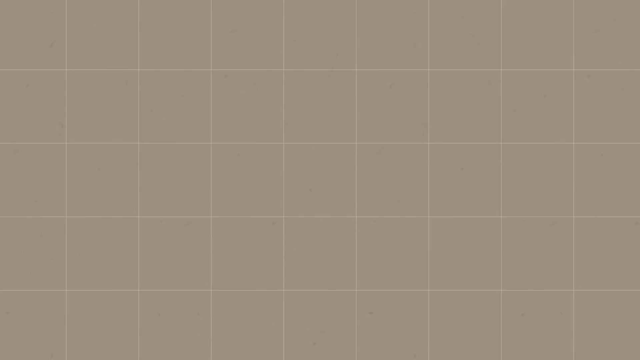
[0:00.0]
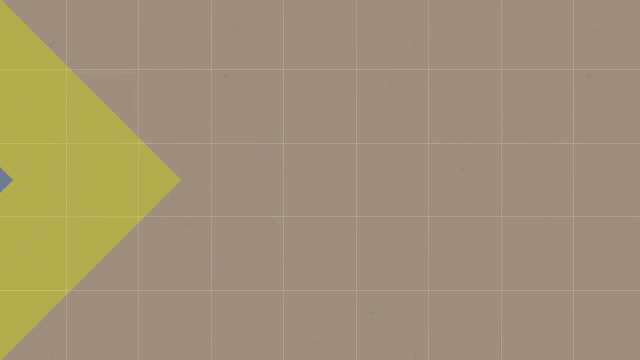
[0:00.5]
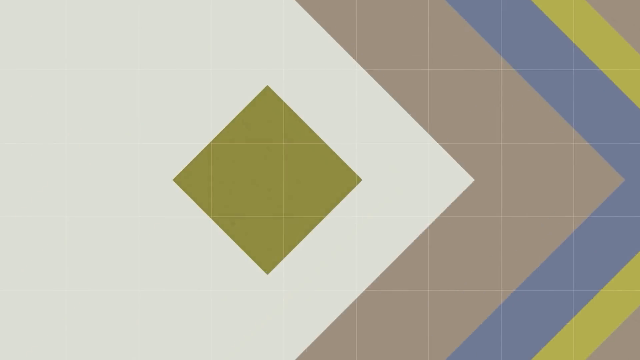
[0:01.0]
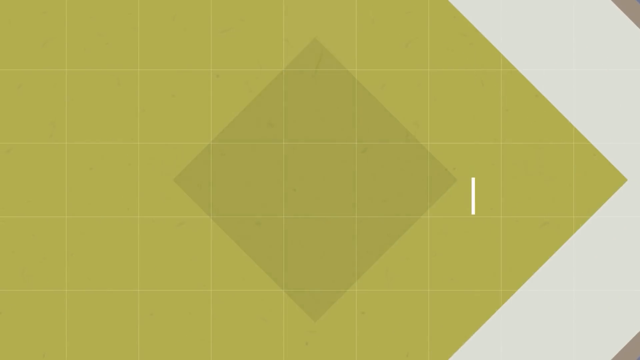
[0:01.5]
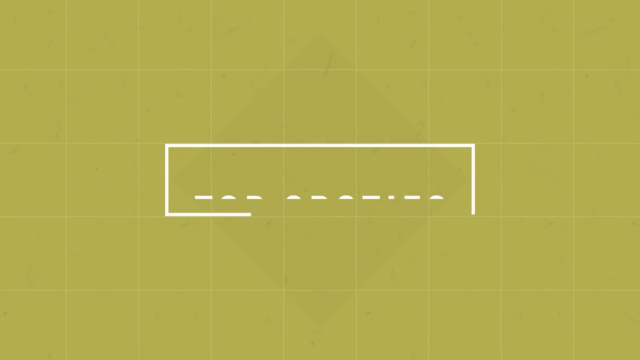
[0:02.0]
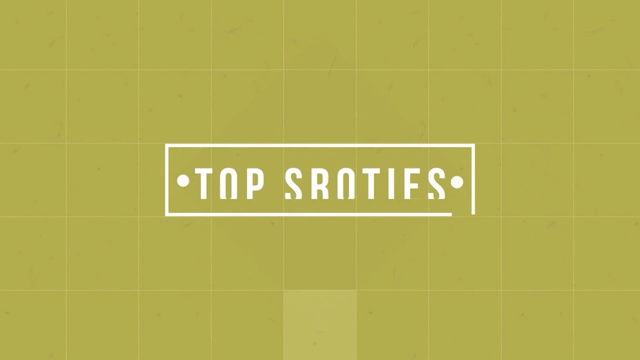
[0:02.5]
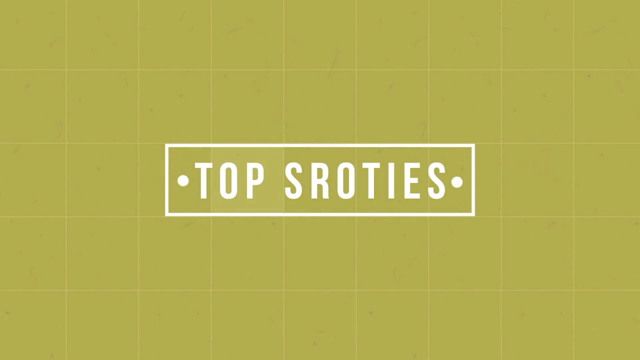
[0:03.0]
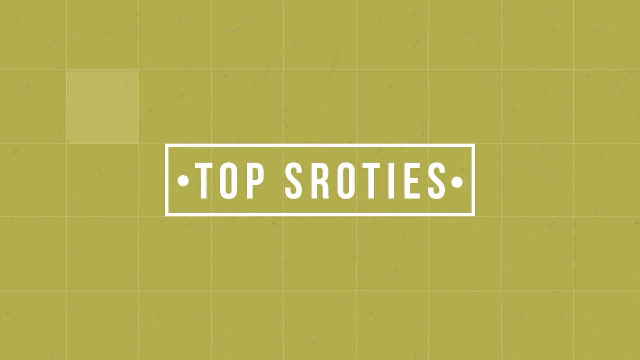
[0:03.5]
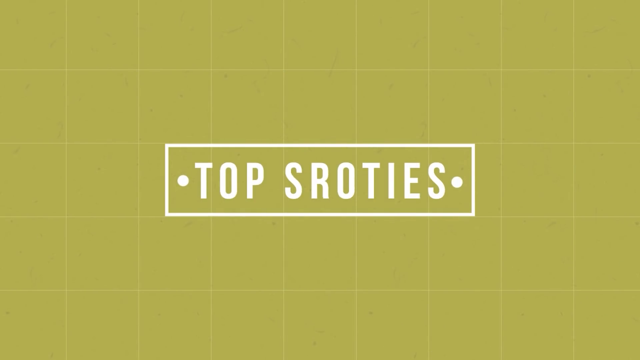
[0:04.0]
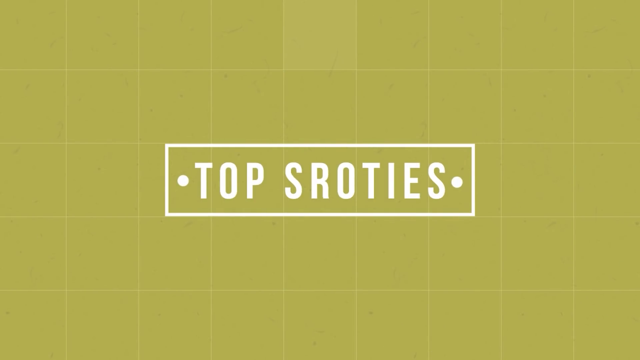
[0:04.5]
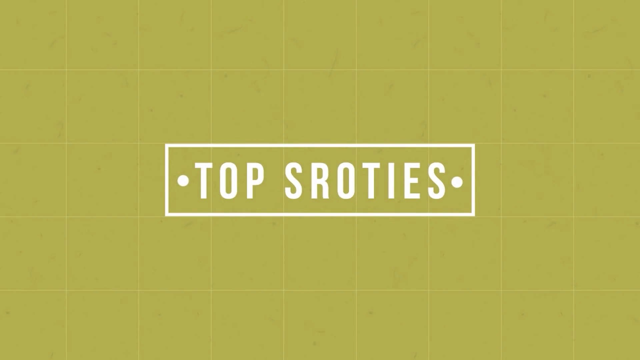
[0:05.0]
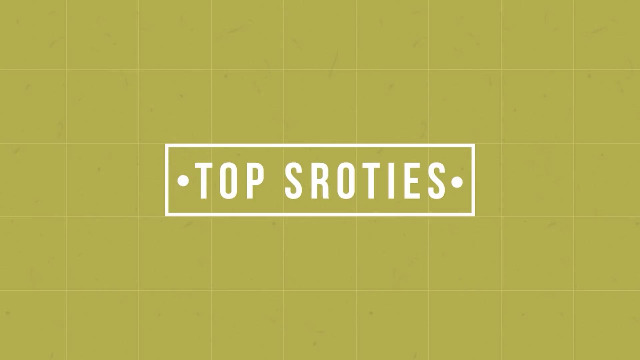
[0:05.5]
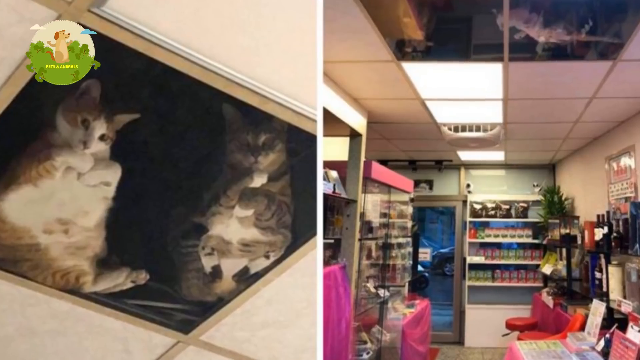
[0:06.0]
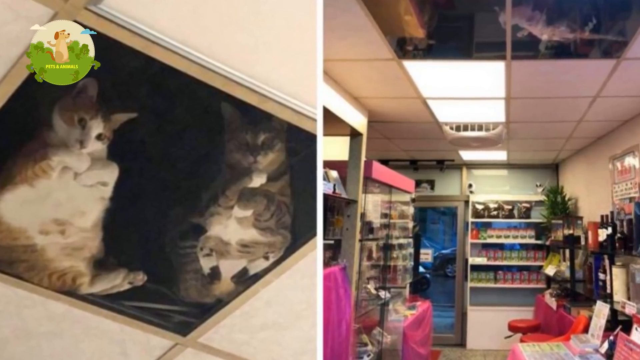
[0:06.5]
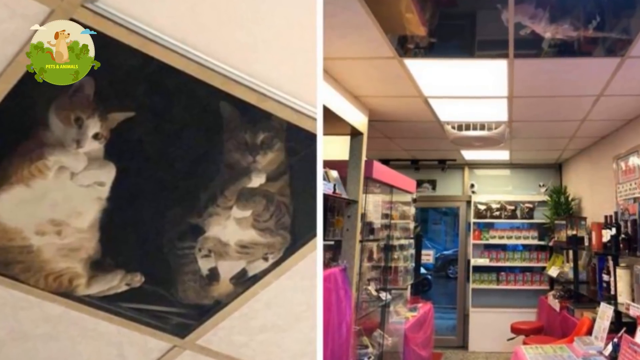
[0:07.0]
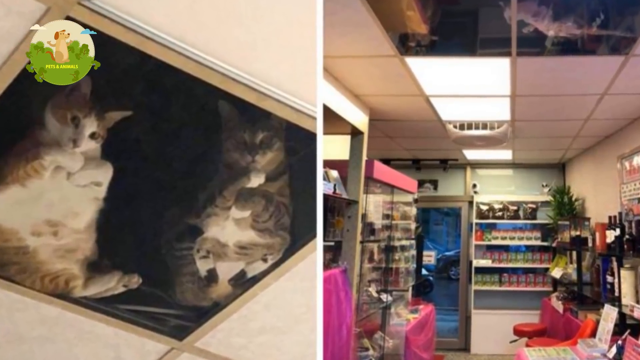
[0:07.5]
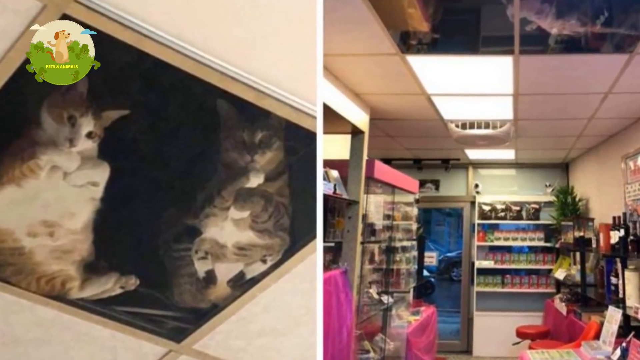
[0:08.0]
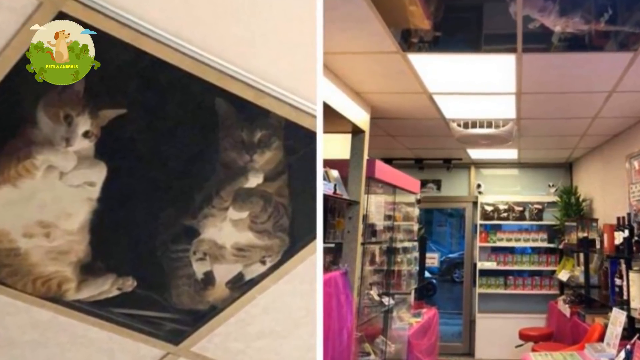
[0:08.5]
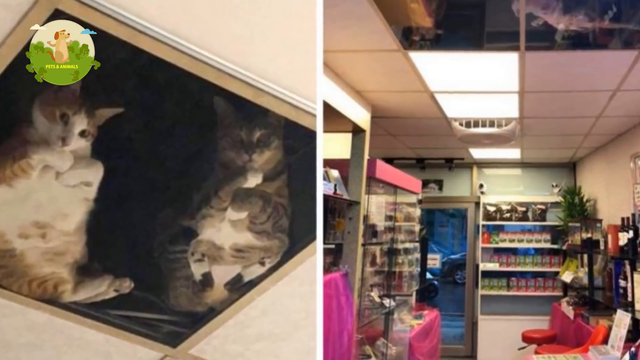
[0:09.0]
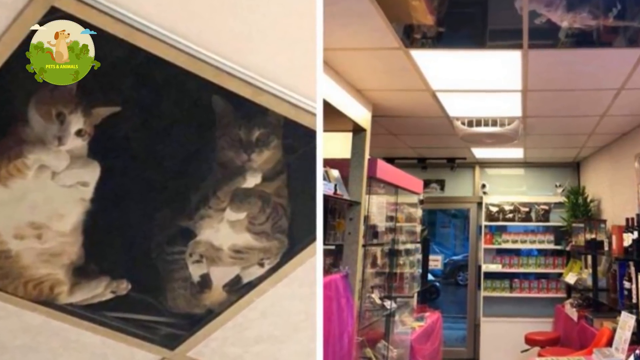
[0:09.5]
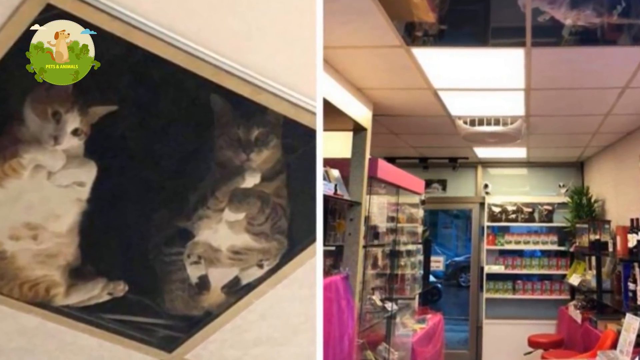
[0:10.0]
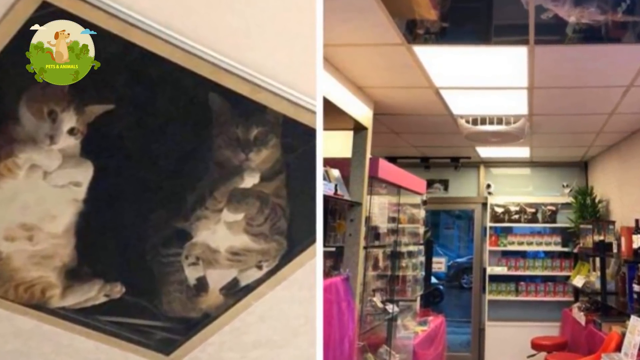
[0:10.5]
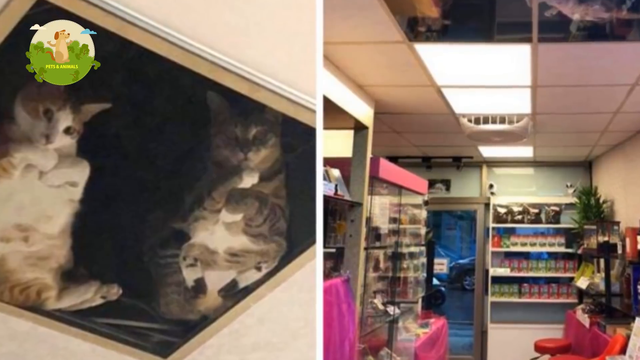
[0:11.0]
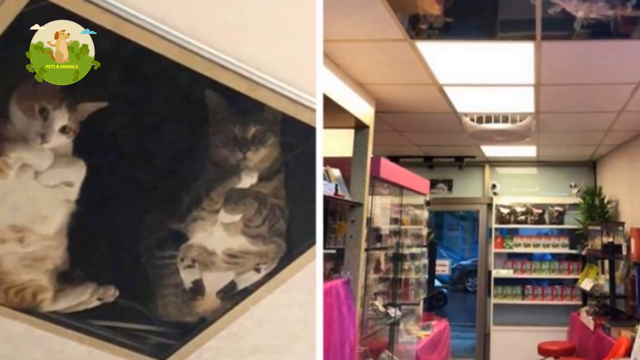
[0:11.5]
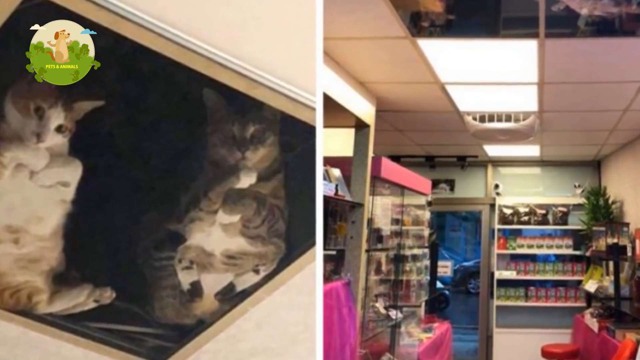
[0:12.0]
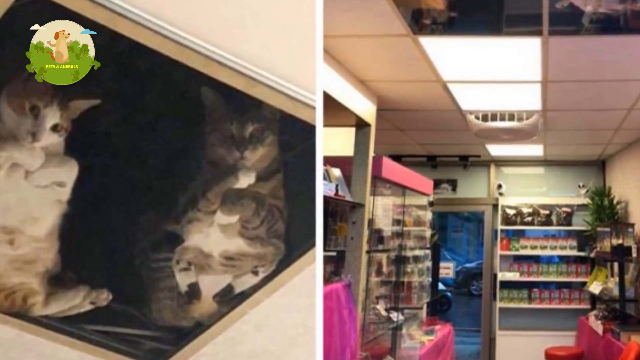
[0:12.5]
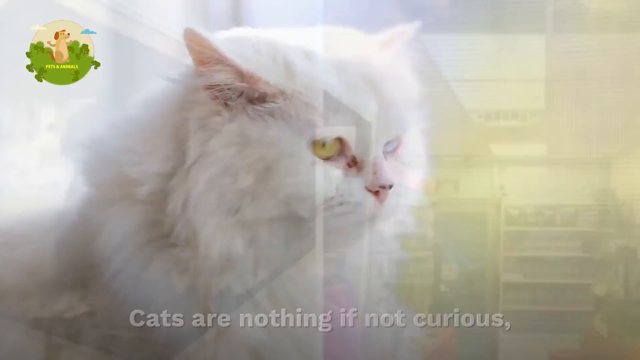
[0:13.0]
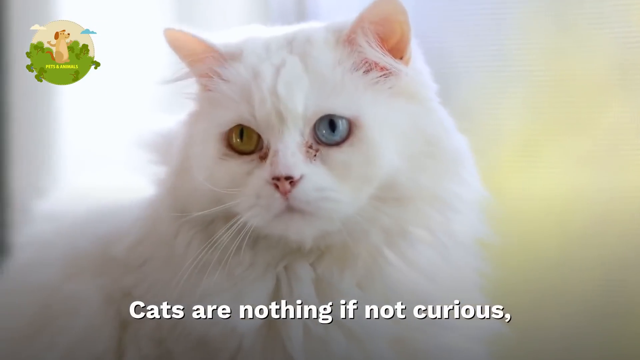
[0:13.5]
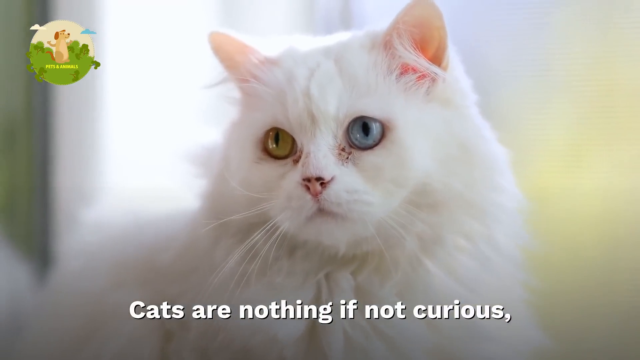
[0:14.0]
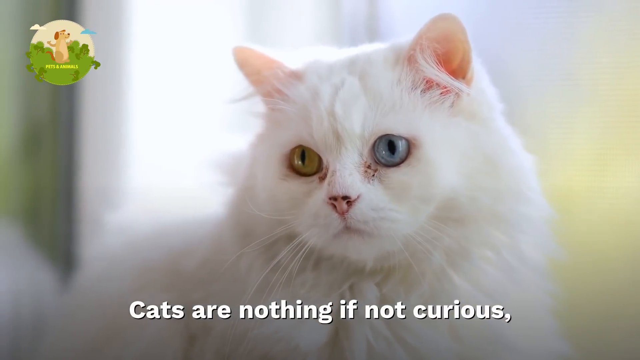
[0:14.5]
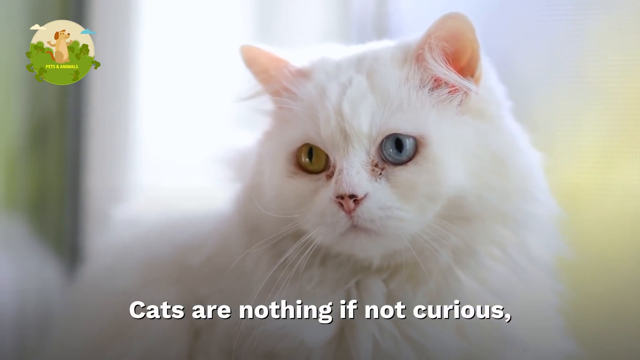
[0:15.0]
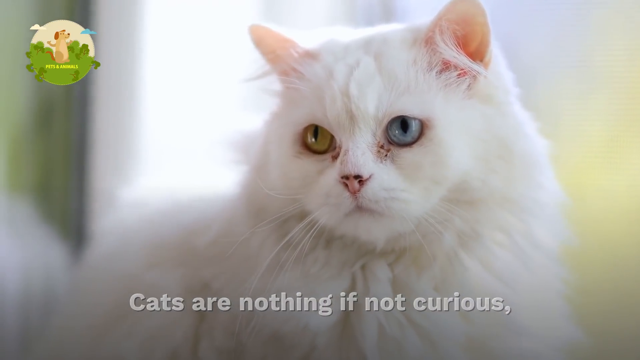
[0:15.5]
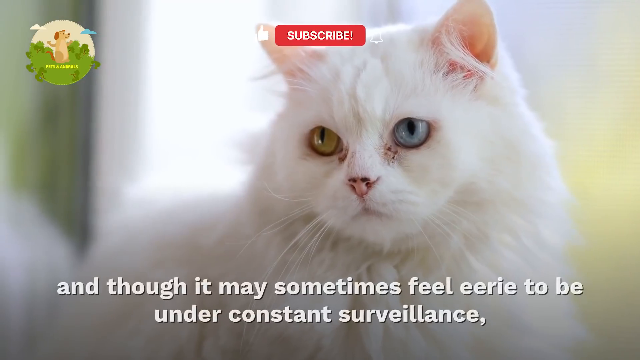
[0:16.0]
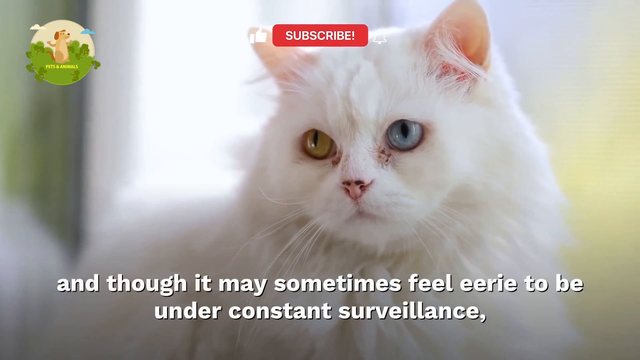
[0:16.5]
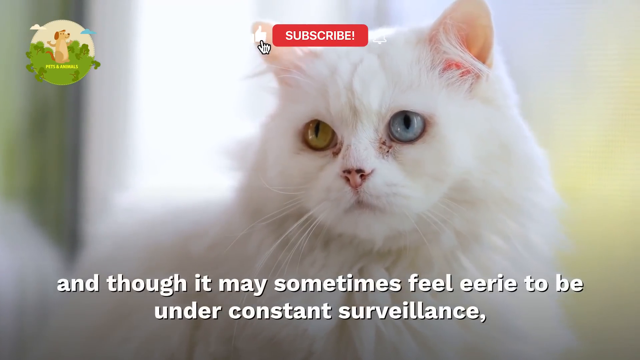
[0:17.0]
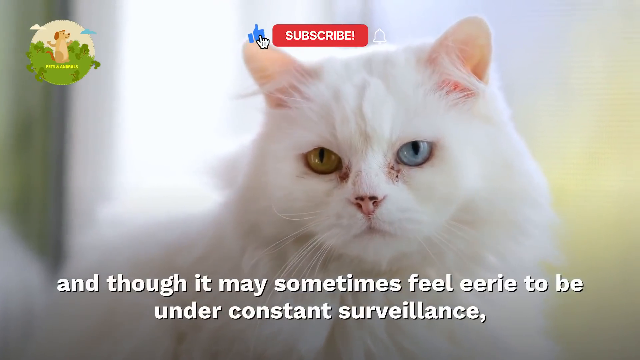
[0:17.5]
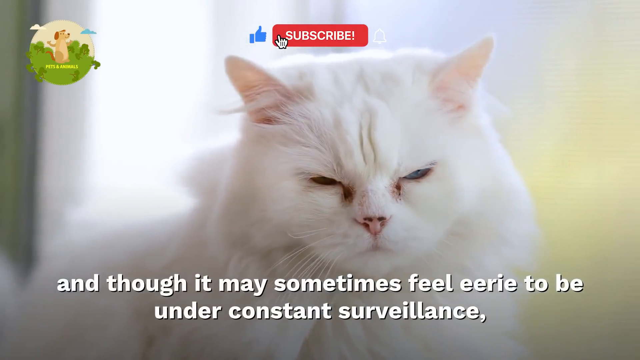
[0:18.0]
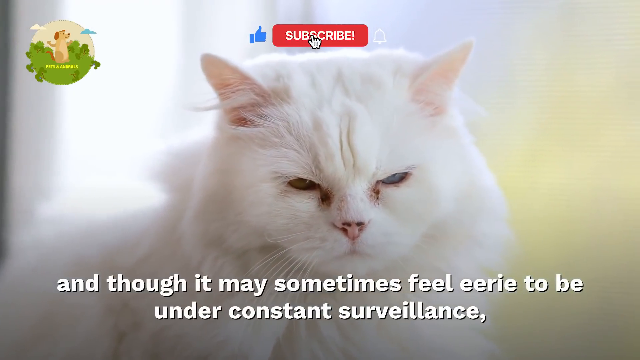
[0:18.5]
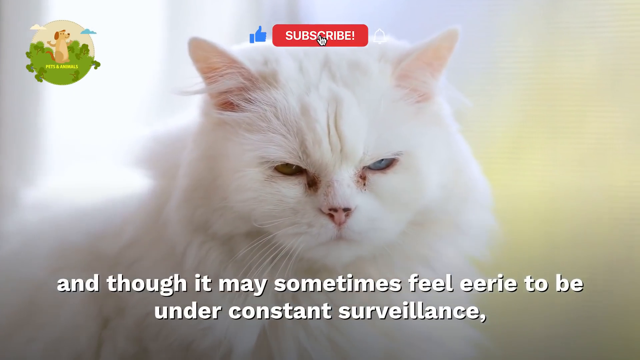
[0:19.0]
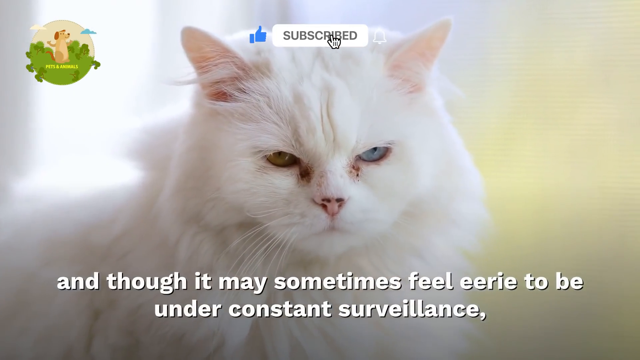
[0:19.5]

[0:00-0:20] The background is beige with squares, and diamonds come up on screen. Then the words "Top Sprotties" appear, spelled out with "s r o t i e s" in that section. Above the title at the top is a subscribe button; a hand clicks it, and the button, which was red, turns white. While the title is on screen, two kittens are shown on the left, and a cartoon dog is in the upper left-hand corner. Cats appear with the text "cats are nothing if not curious." A cat with one brown eye and one blue eye is shown as the text reads "and though it may sometimes feel eerie to be under constant surveillance" and "it is also kind of nice to know that at least."